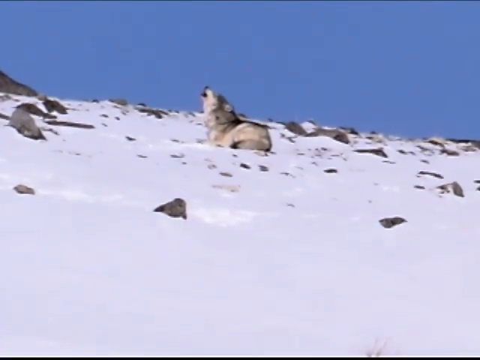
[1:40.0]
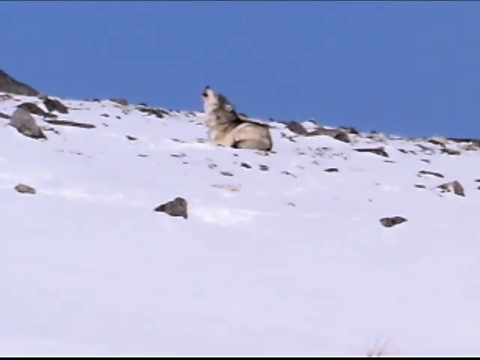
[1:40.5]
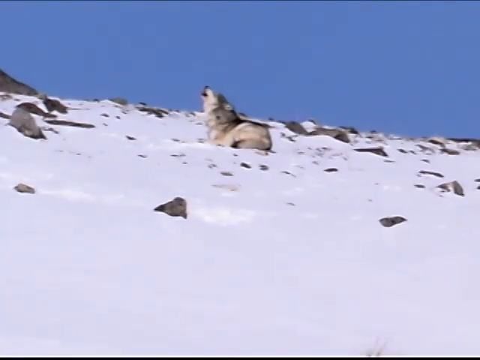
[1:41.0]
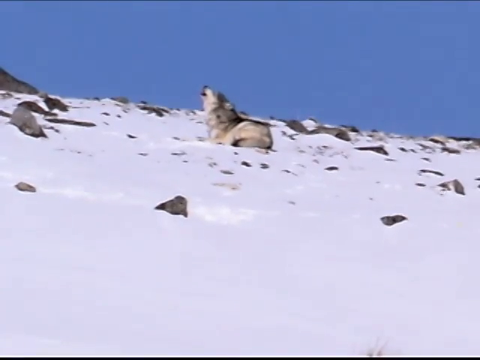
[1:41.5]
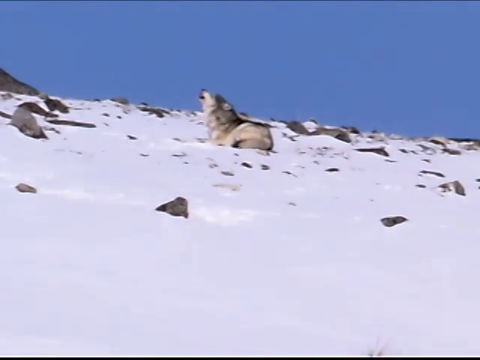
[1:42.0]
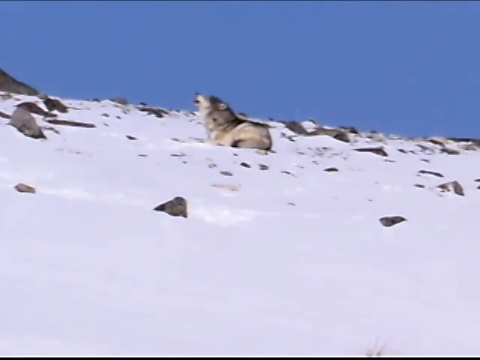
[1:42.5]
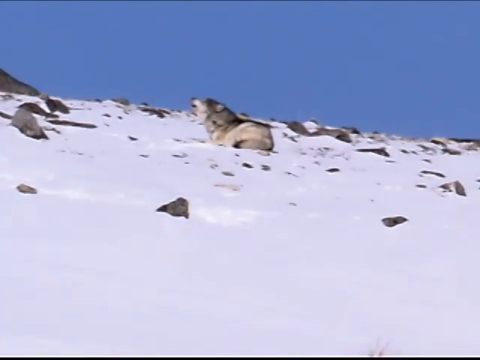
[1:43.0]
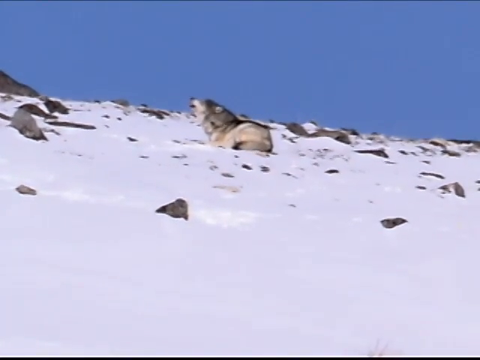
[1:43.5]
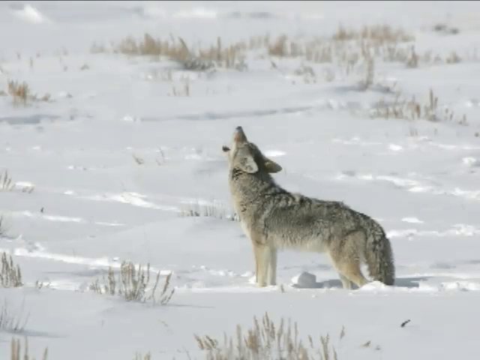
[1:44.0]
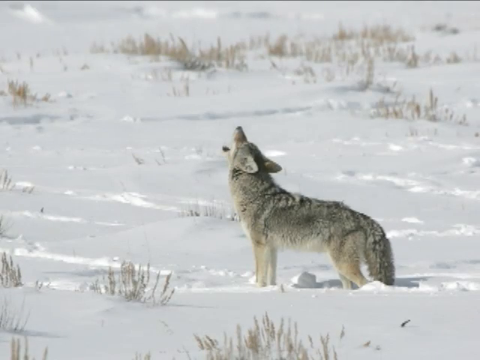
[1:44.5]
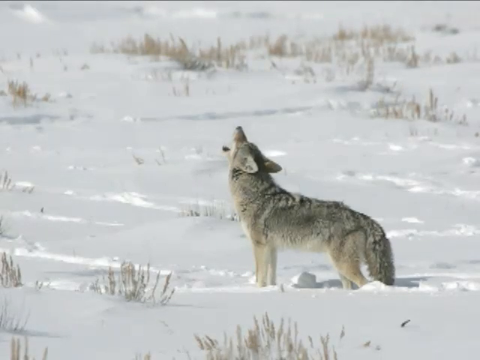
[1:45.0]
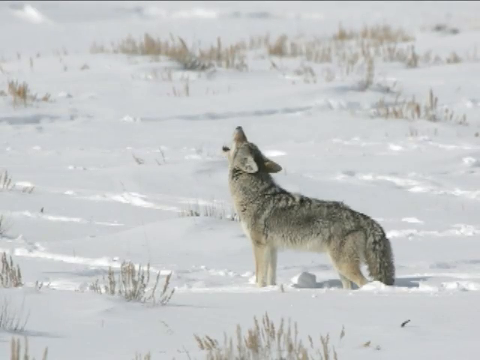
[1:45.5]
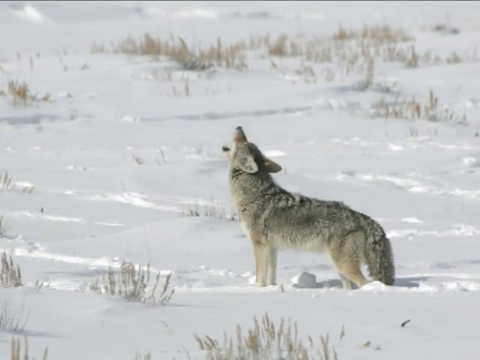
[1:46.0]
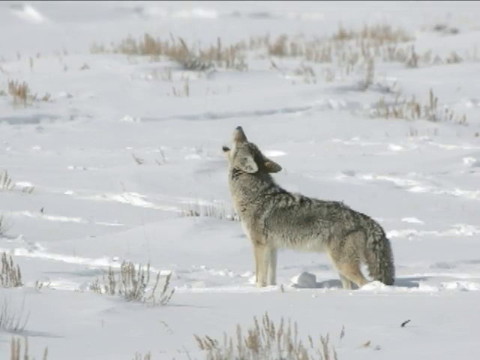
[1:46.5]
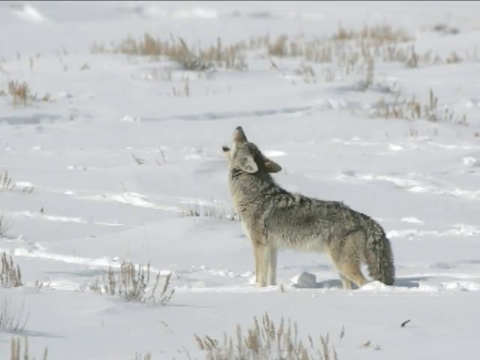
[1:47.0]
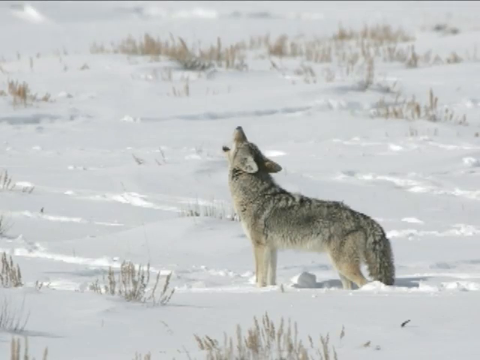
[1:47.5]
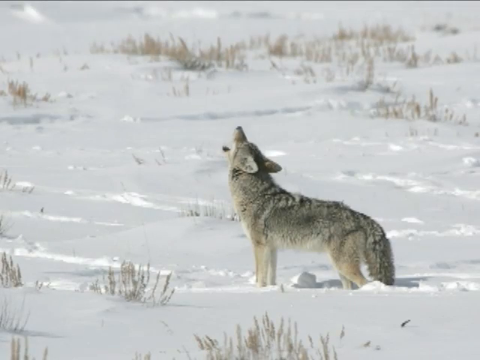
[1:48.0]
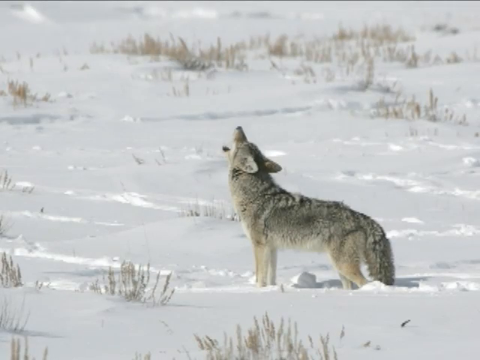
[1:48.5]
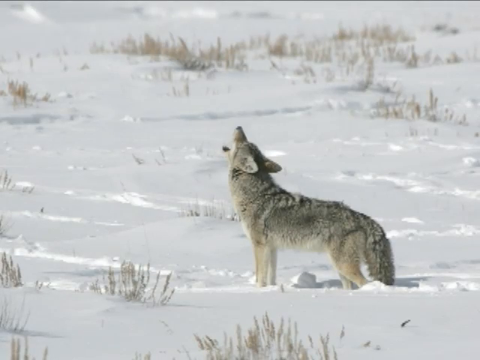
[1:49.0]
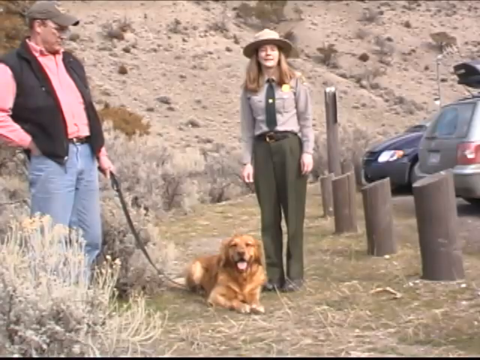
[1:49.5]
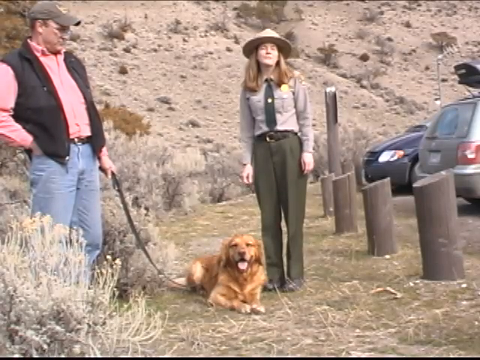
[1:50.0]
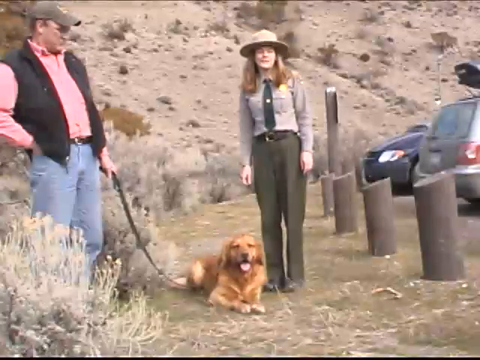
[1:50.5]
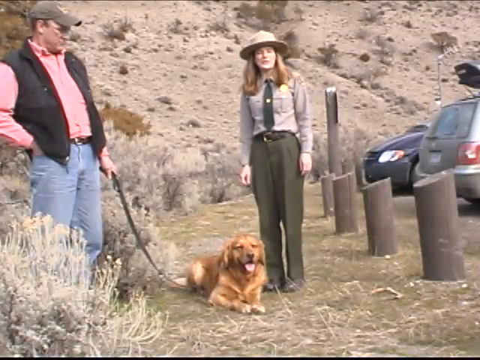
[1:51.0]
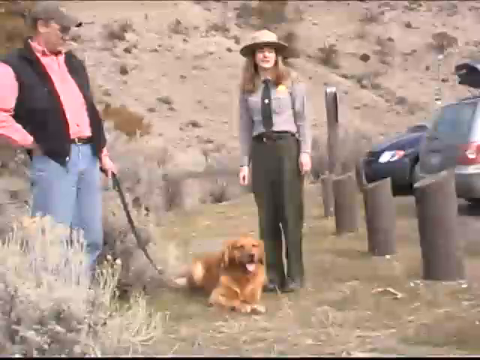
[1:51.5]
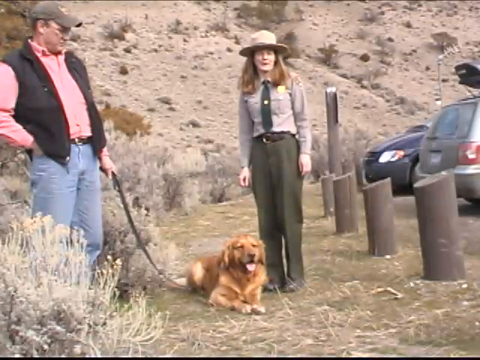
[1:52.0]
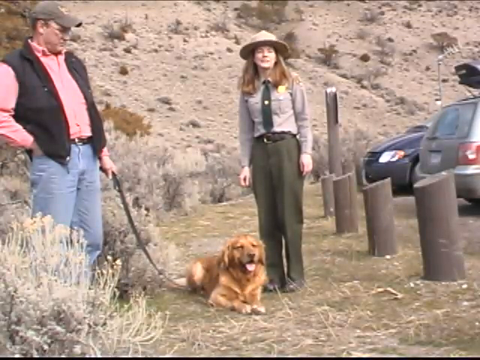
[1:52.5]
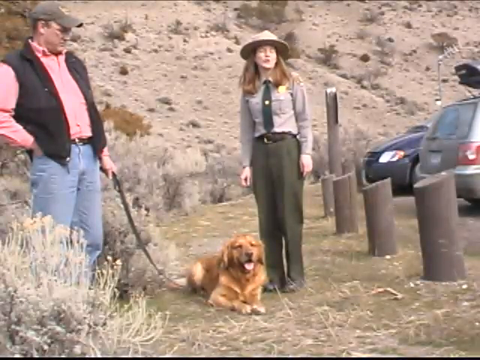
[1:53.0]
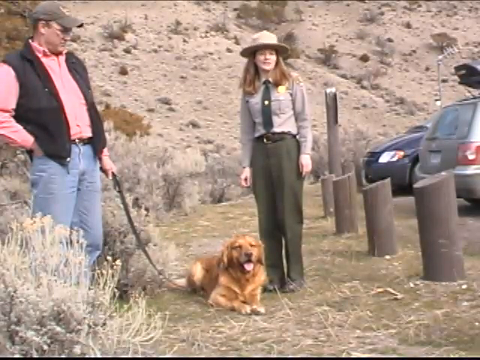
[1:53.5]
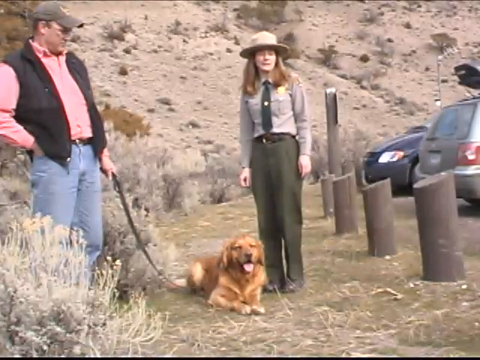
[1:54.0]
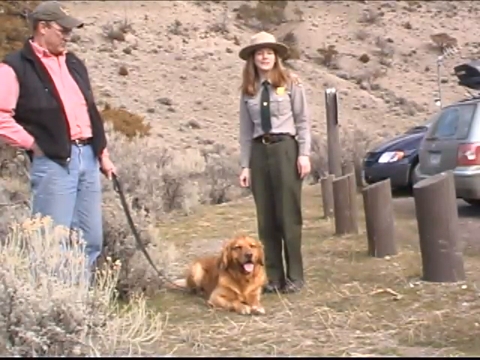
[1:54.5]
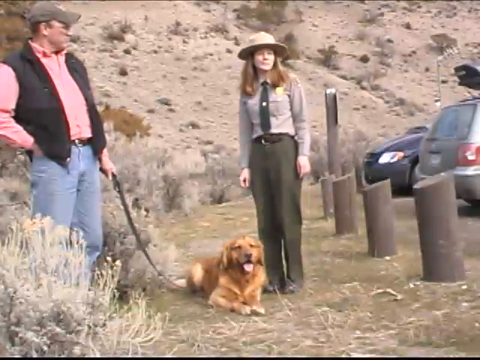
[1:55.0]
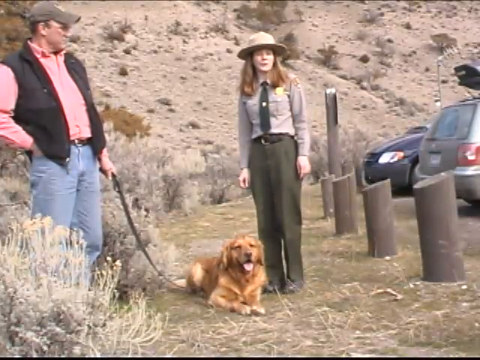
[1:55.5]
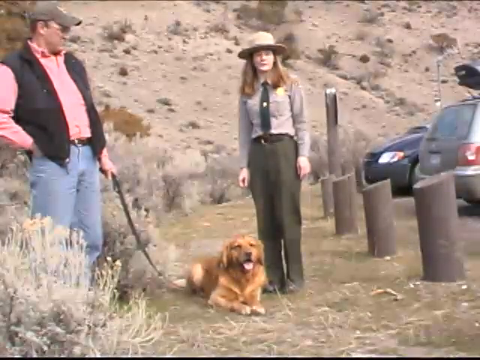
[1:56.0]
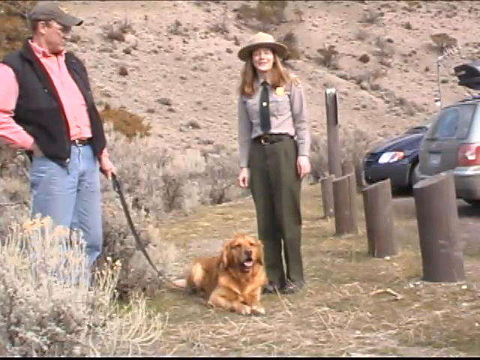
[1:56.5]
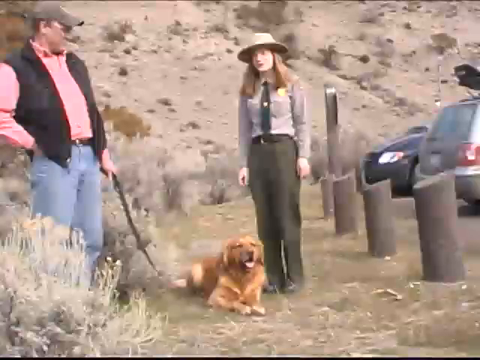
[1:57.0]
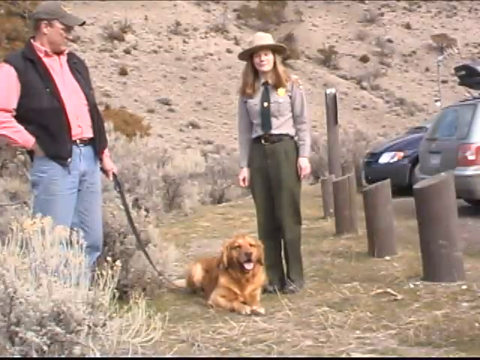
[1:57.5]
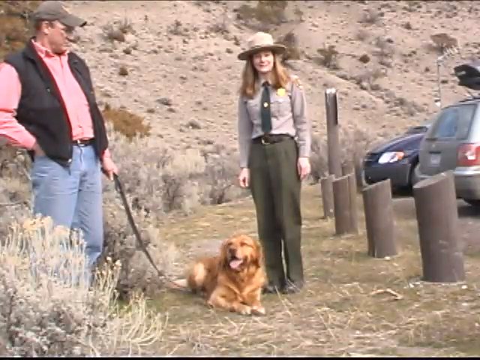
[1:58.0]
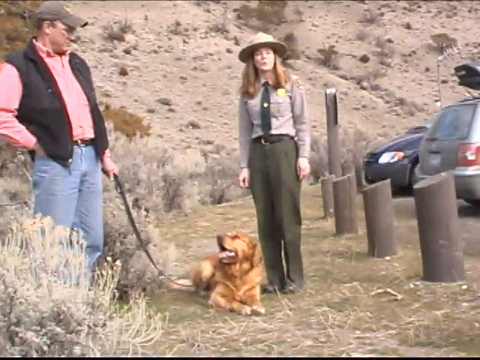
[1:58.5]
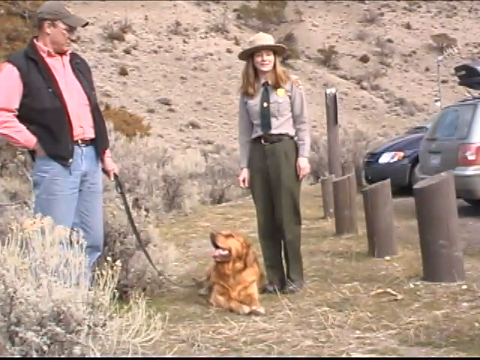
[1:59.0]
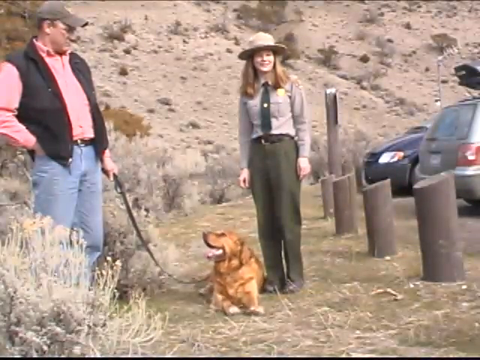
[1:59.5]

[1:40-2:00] A gray and white wolf sits on all fours on a snowy mountainside, howling to the clear blue sky. This is replaced by a coyote or a wolf howling to the sky; it is a darker gray with a brown underbelly. Snow covers the ground, and the background seems to be dried grass. Beth Taylor comes back into view, standing in the middle of the screen in her park ranger outfit, with a rocky hill in Yellowstone park in the background. To her left is a parking lot with two 90s-style cars in the spaces. To Beth's left on the ground sits a golden retriever on all fours, looking especially happy as it faces the camera with its tongue out. A black leash leads from the dog to a man standing on the left side of the screen, who wears a pink button-up shirt with a black vest over it, a ball cap and jeans.